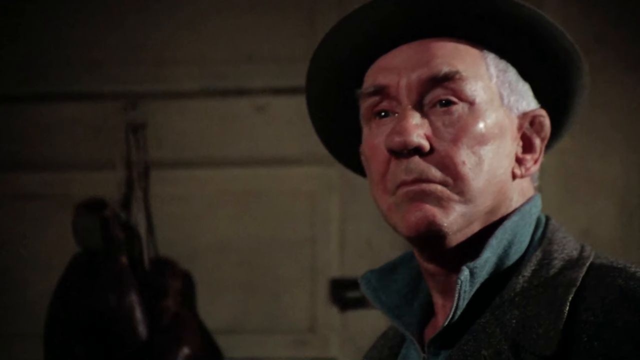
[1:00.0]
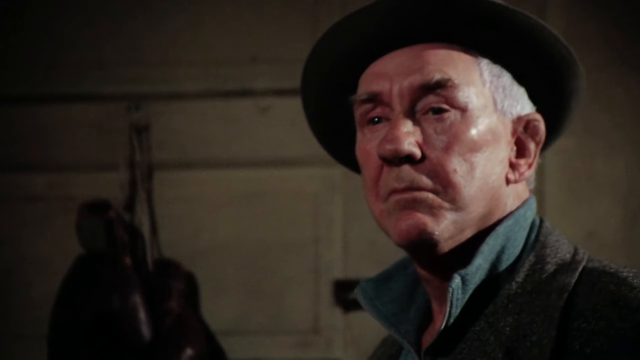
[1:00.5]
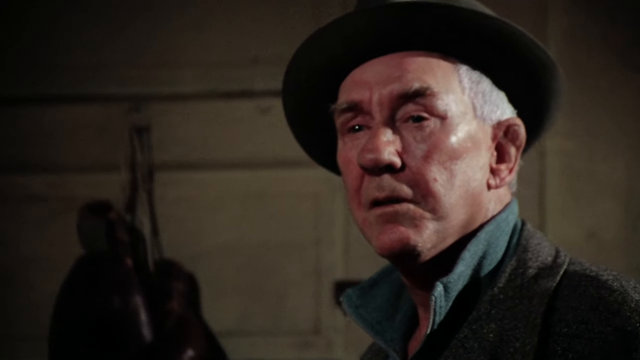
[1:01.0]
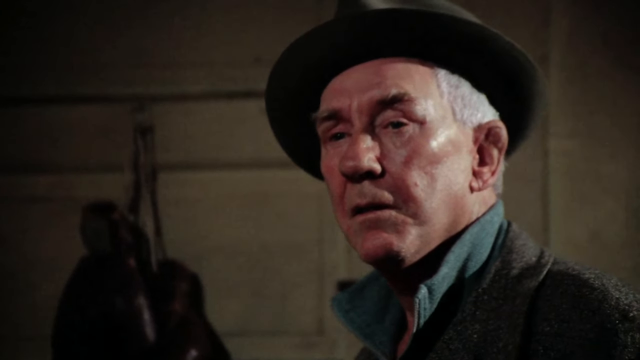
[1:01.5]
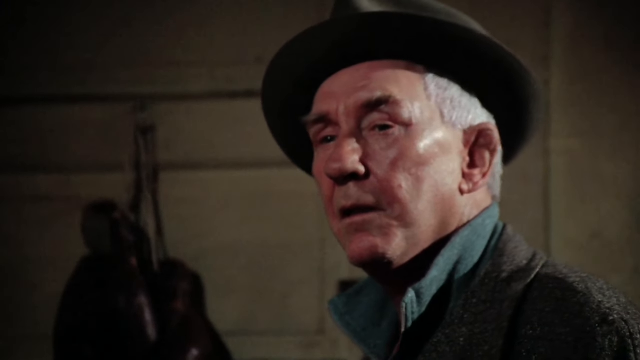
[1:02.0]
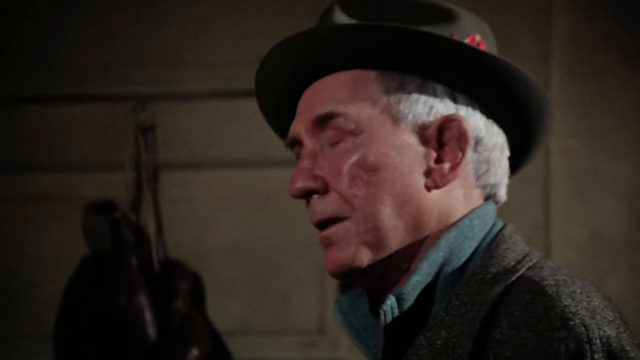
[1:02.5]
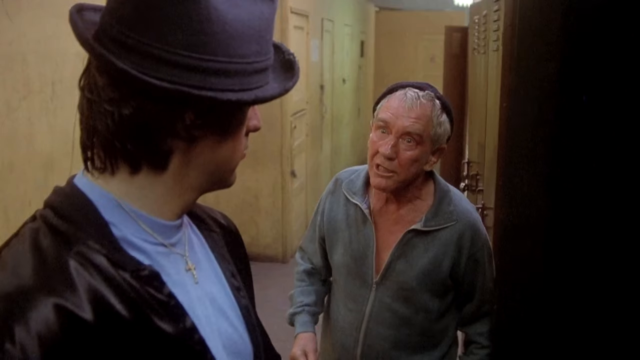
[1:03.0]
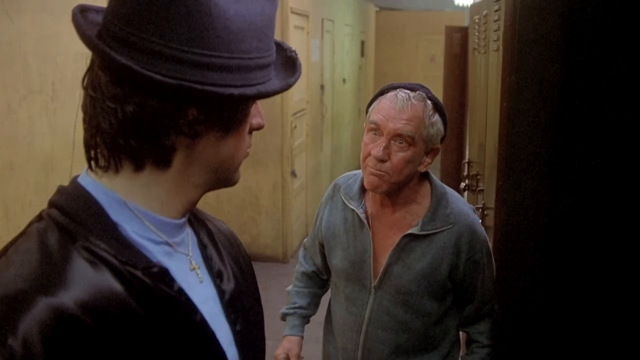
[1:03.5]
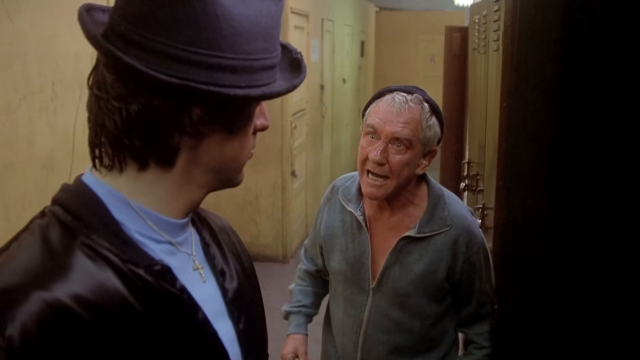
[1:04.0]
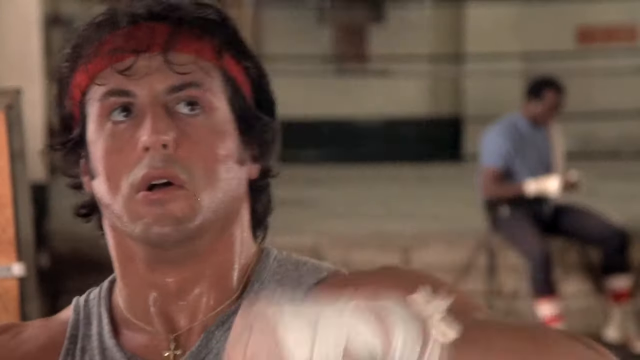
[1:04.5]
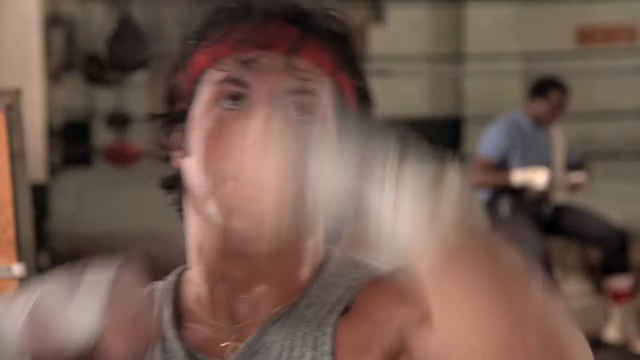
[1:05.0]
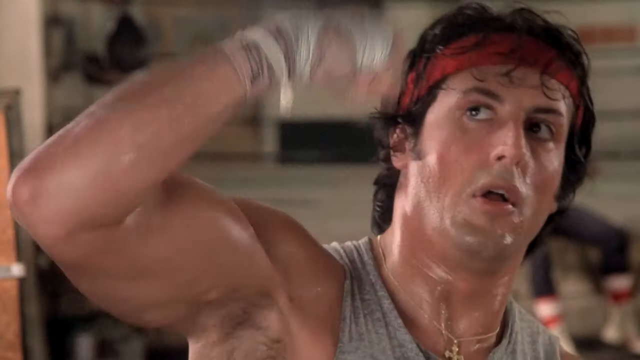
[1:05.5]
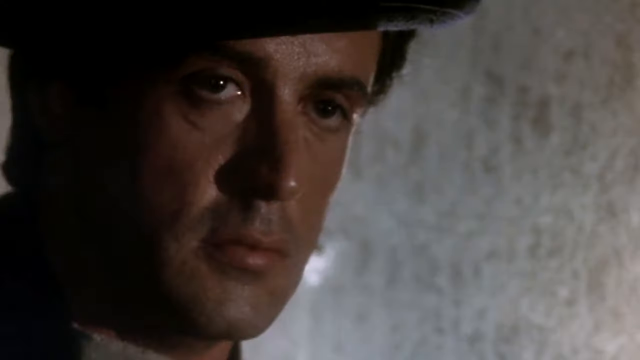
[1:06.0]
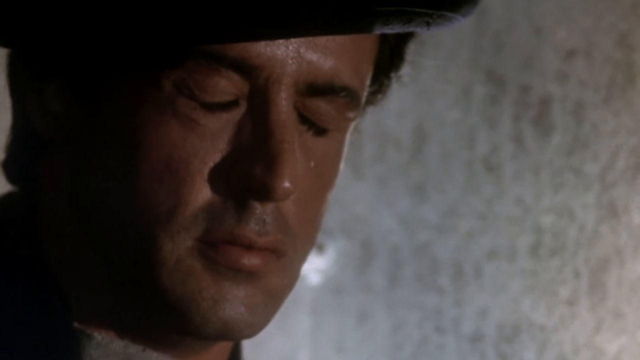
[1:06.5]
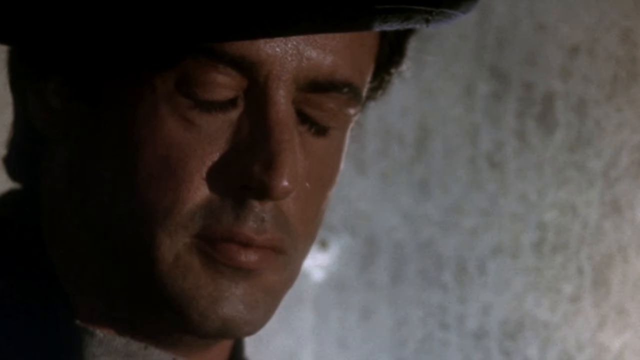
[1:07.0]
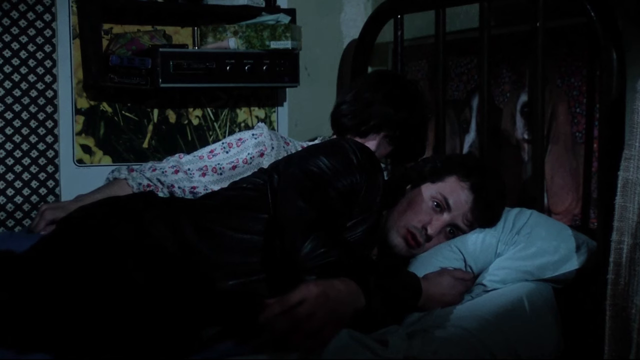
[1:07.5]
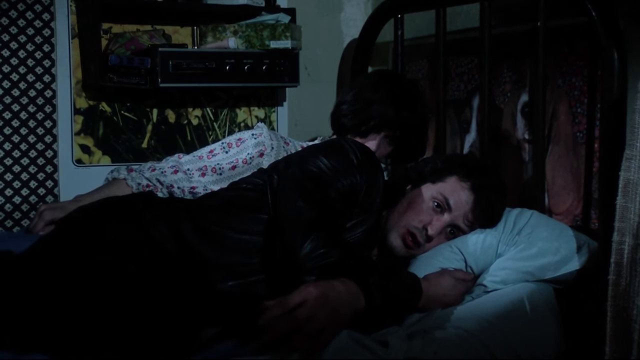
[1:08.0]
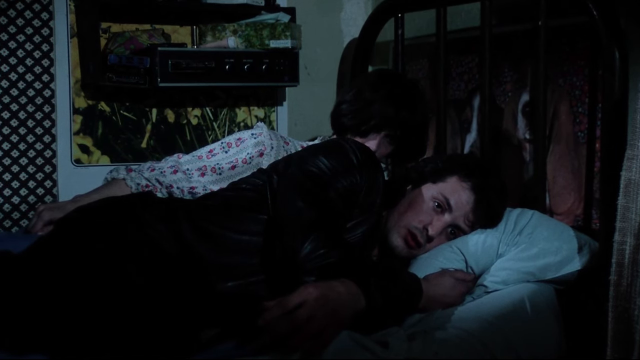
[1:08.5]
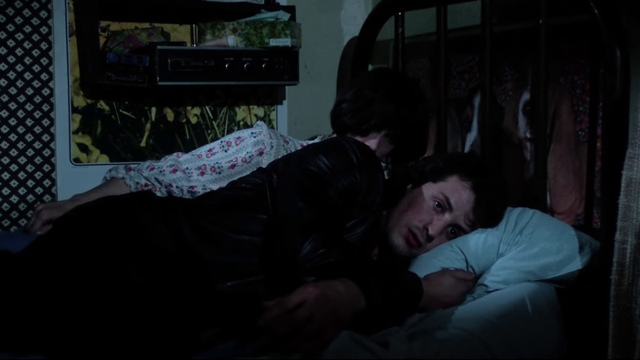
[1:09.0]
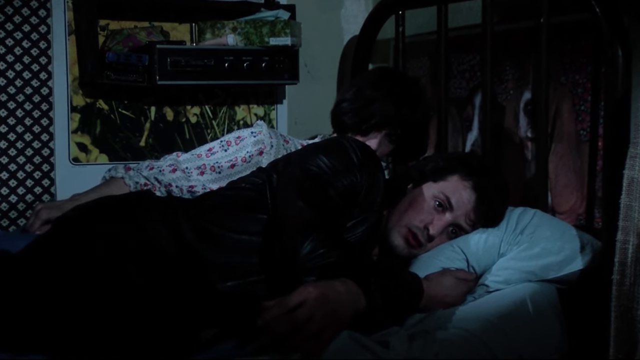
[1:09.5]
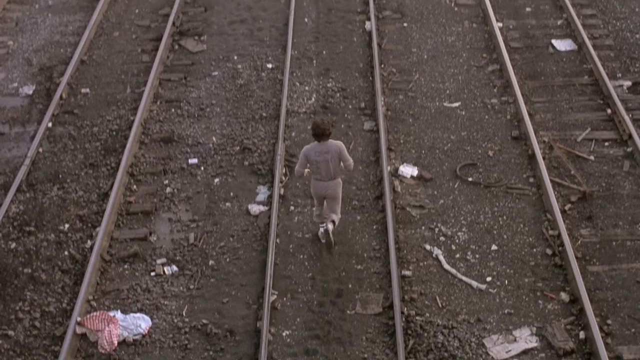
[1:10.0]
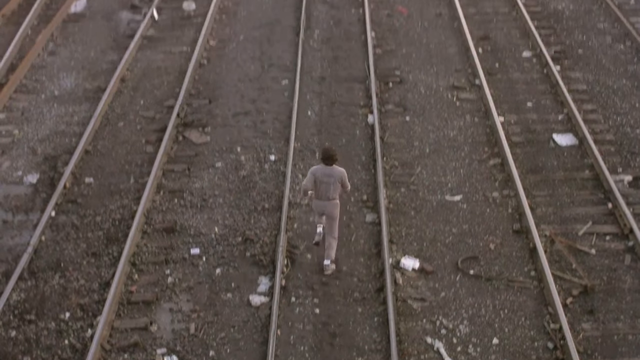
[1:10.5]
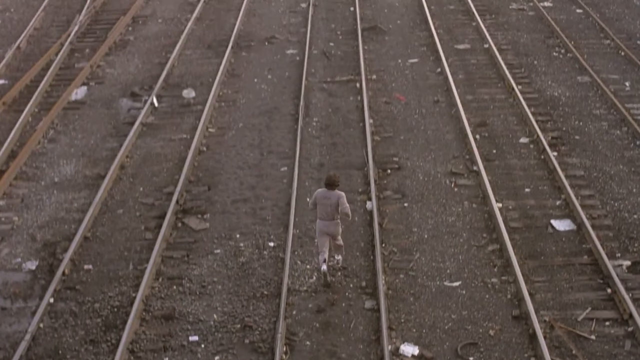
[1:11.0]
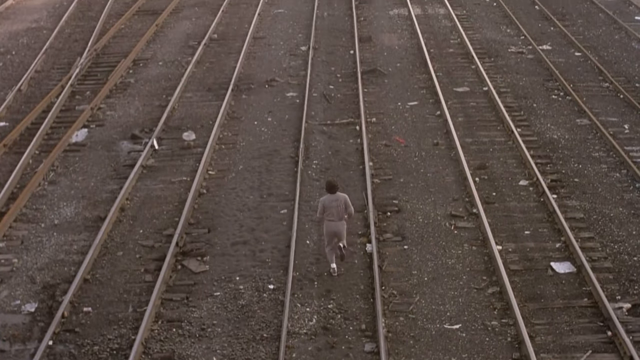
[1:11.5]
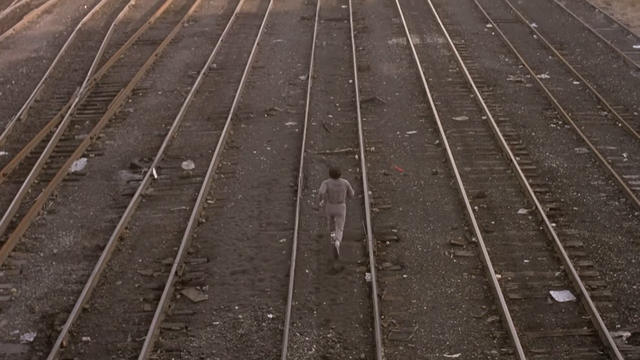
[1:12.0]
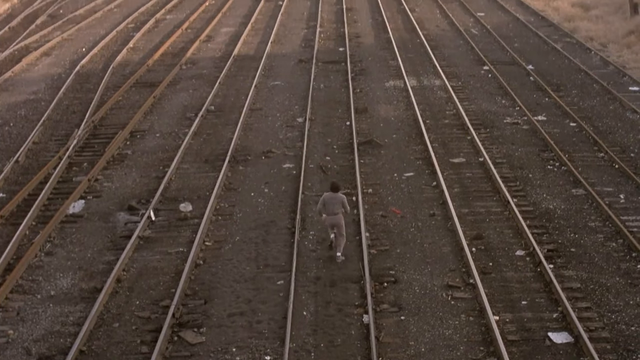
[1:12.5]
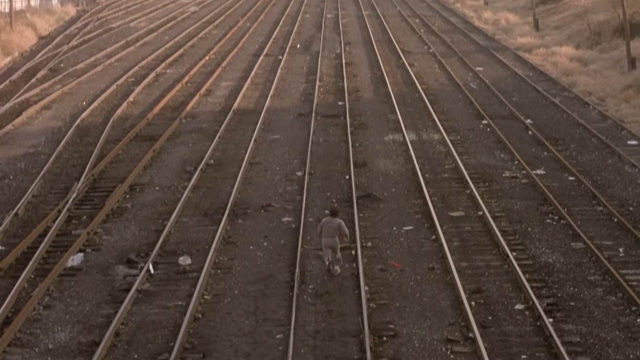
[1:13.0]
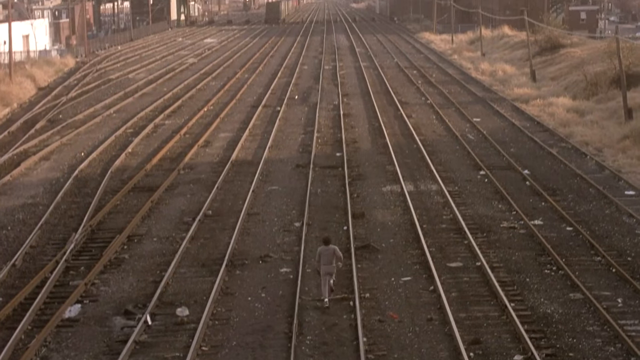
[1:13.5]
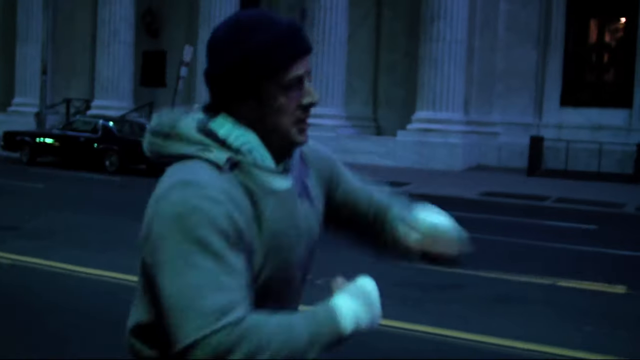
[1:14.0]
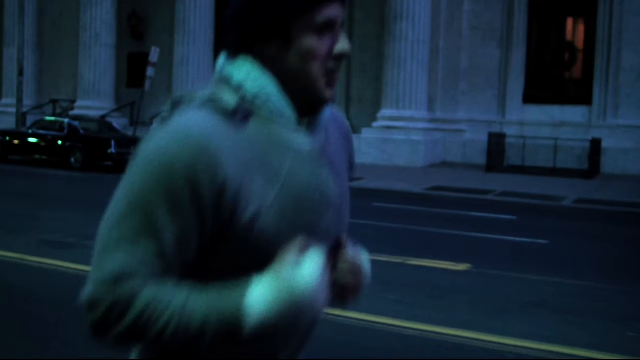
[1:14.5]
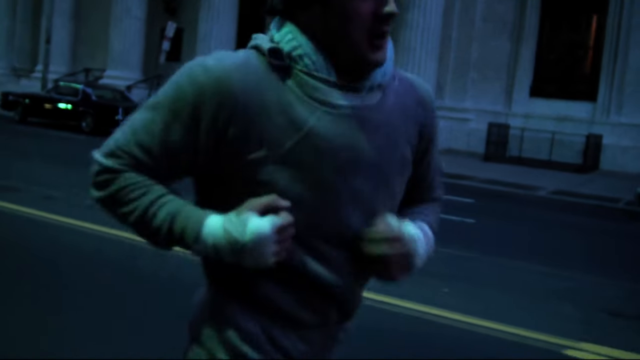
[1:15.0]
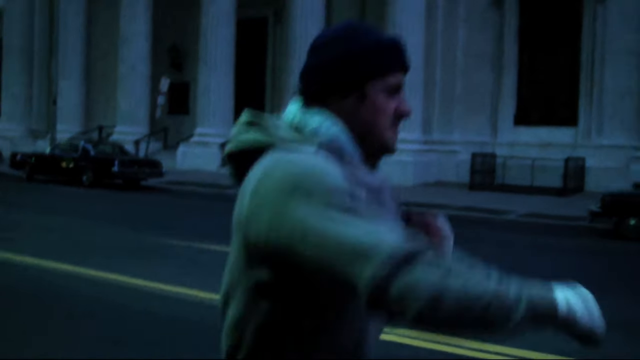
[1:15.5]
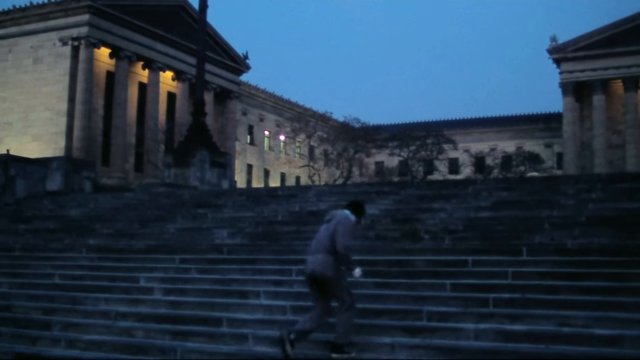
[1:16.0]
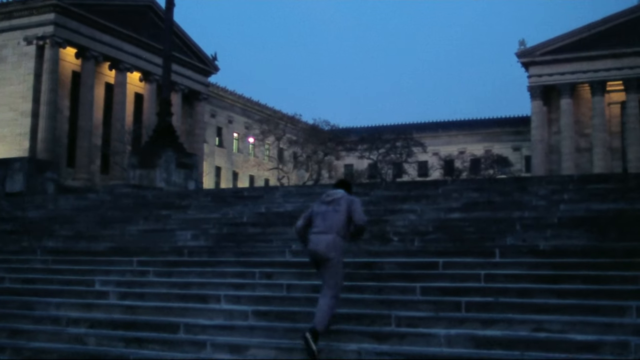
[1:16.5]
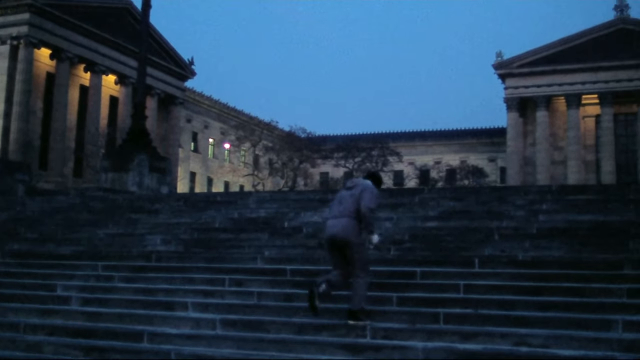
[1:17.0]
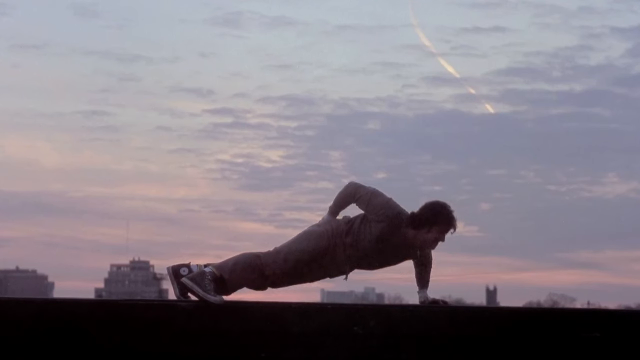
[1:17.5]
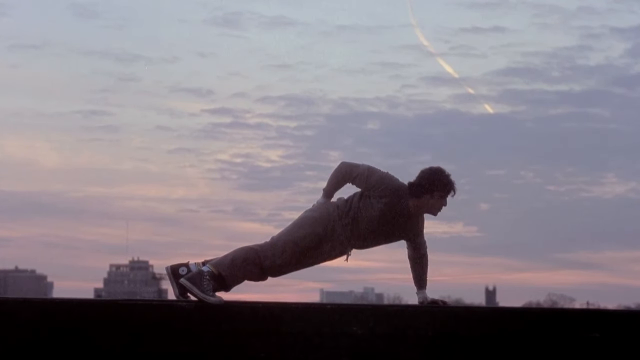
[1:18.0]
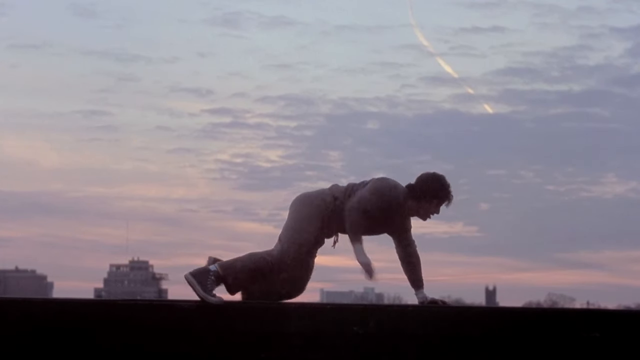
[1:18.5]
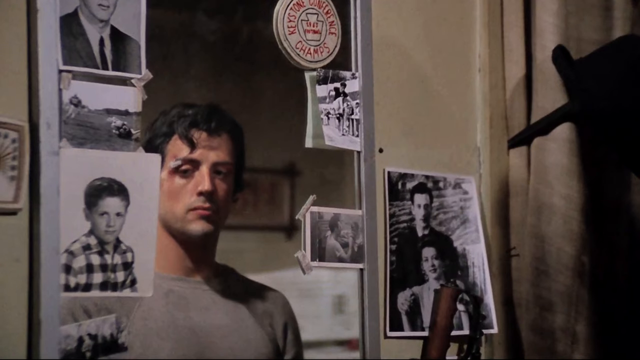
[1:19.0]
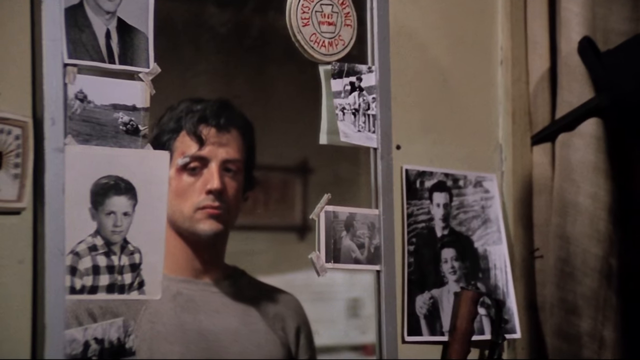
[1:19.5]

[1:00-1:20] The focus is on an old man. The first man is then seen running and training: he does one-handed push-ups, practises punching, and hits a punching bag very fast. He runs outside over very rough ground with railway lines. He and another old man have a conversation and look like they are arguing, as the old man's facial expression shows. The man trains in all sorts of ways, running at night and during the day, and looks very determined, maybe practising for a boxing fight. The video shows each step of his training.